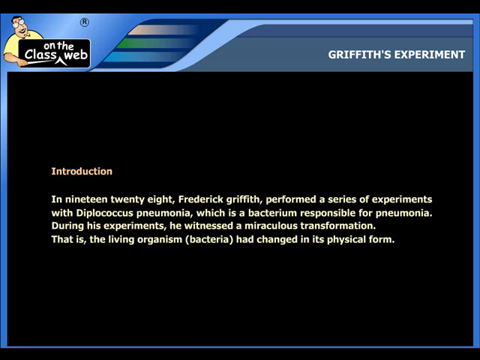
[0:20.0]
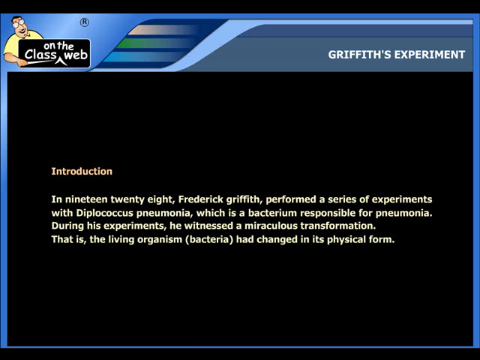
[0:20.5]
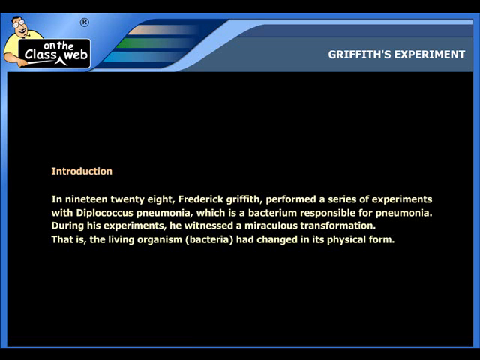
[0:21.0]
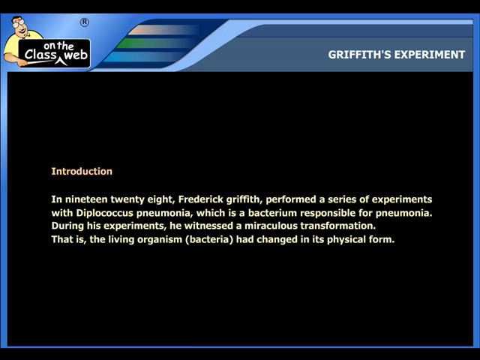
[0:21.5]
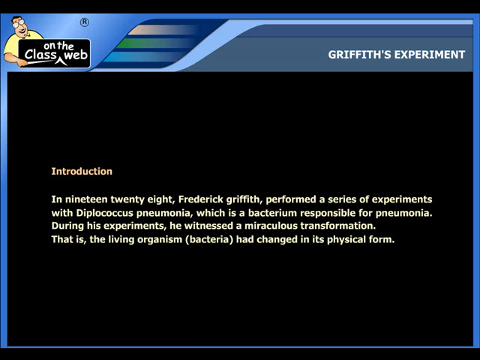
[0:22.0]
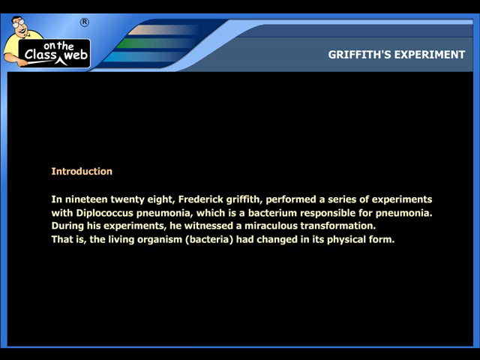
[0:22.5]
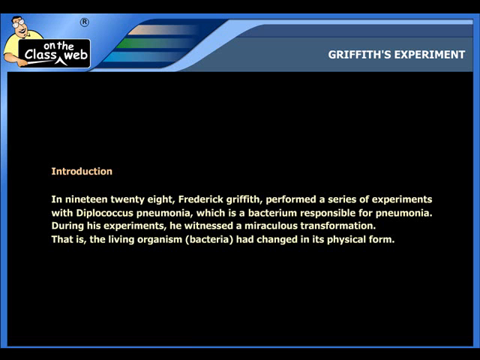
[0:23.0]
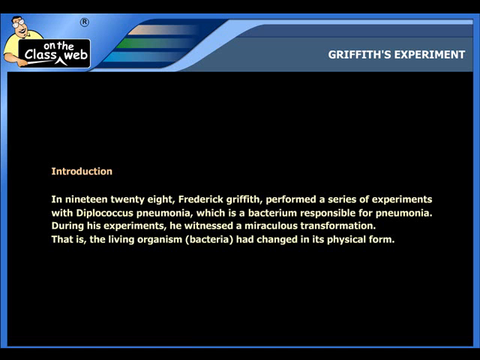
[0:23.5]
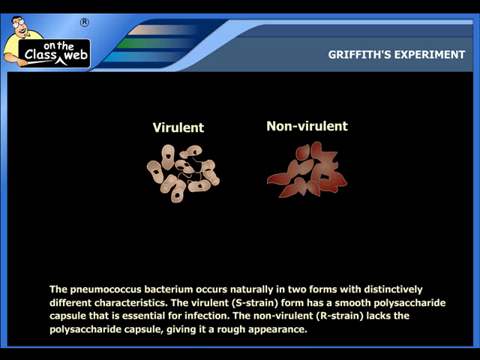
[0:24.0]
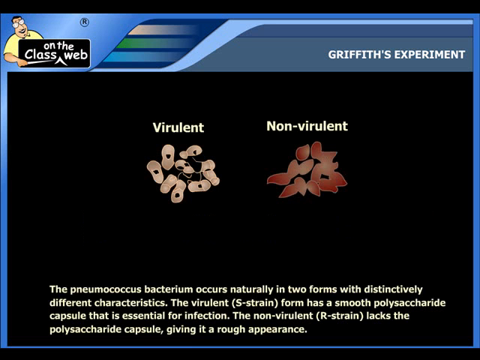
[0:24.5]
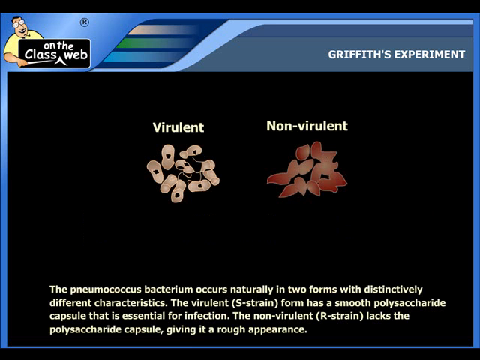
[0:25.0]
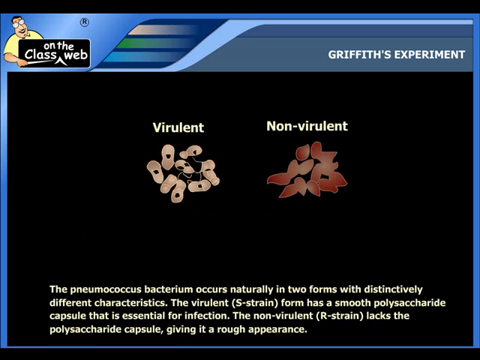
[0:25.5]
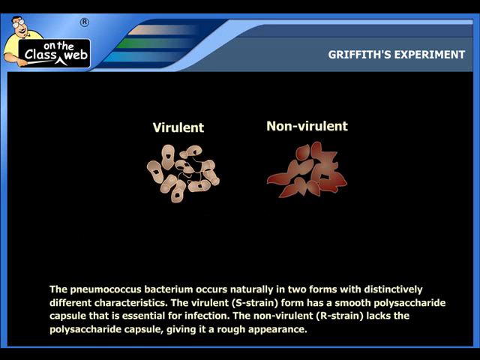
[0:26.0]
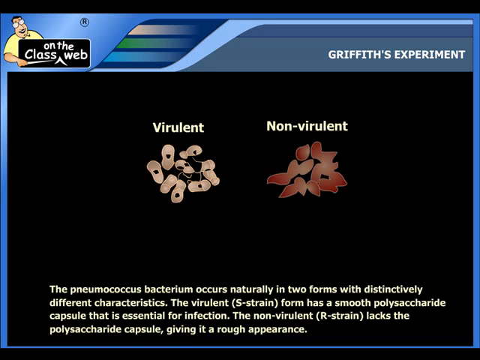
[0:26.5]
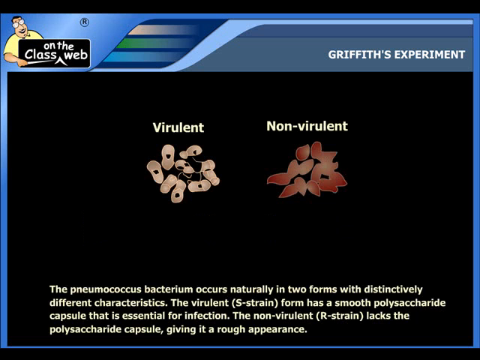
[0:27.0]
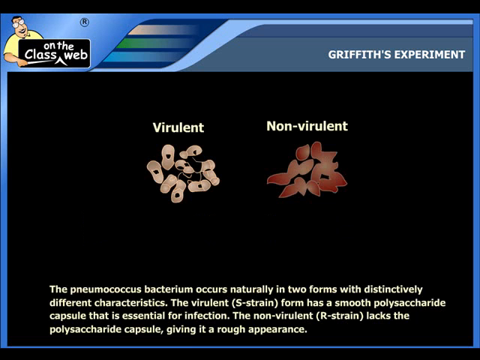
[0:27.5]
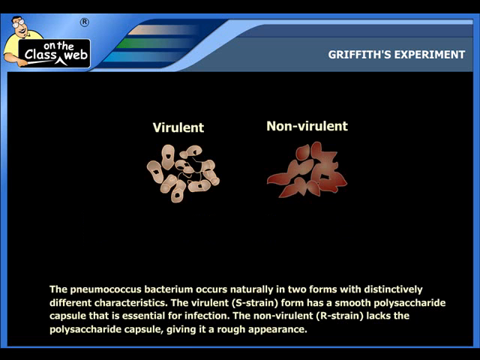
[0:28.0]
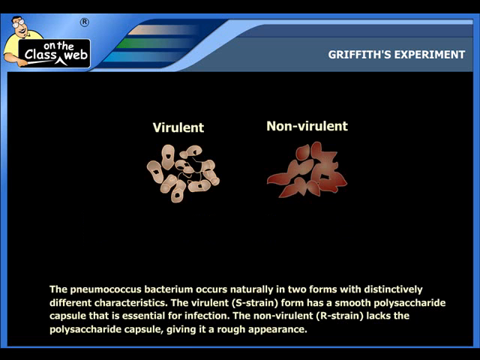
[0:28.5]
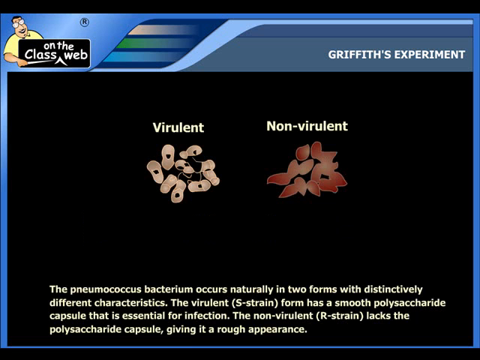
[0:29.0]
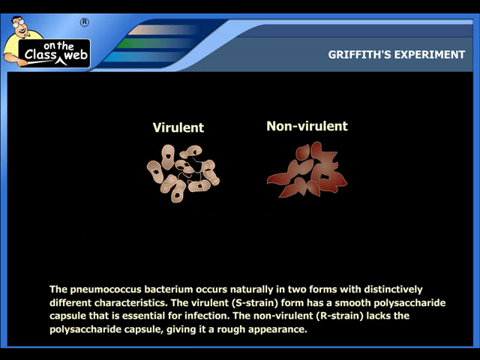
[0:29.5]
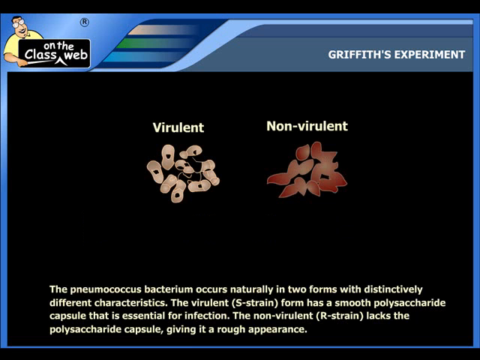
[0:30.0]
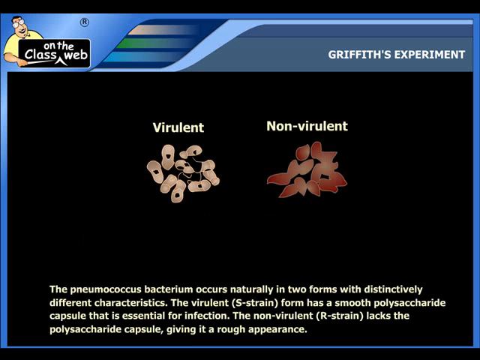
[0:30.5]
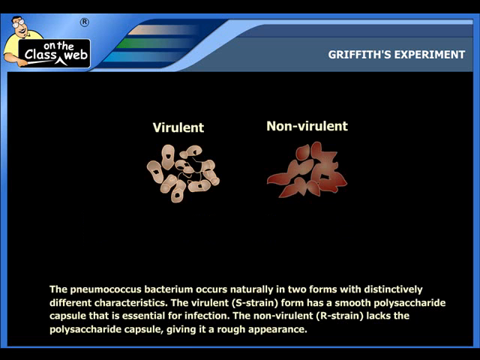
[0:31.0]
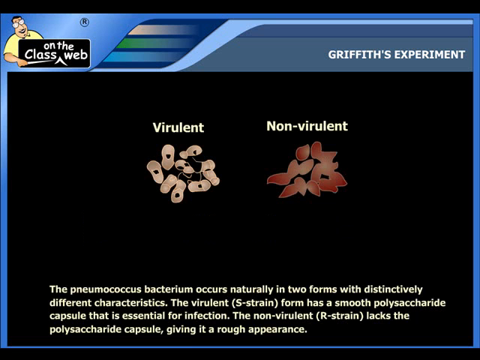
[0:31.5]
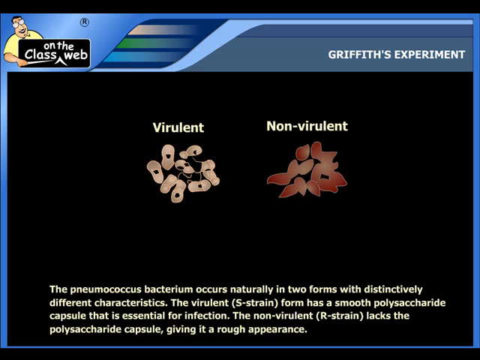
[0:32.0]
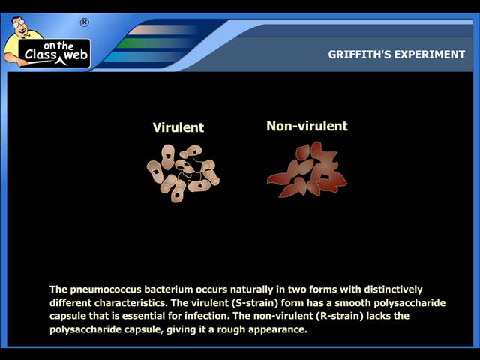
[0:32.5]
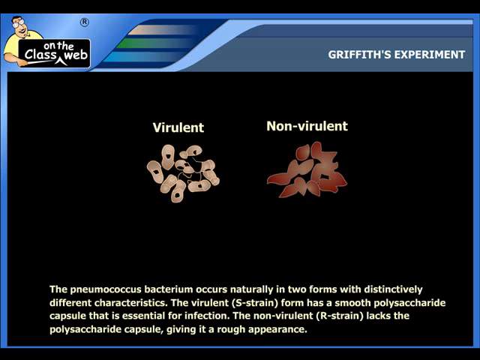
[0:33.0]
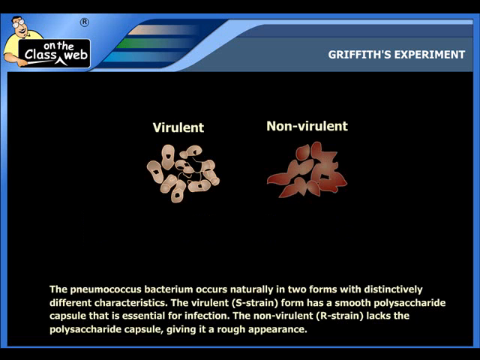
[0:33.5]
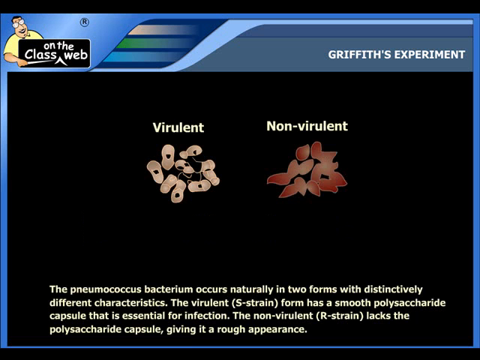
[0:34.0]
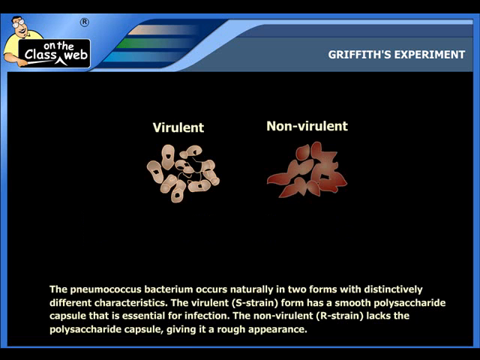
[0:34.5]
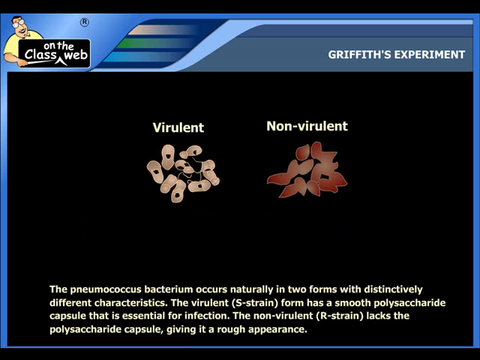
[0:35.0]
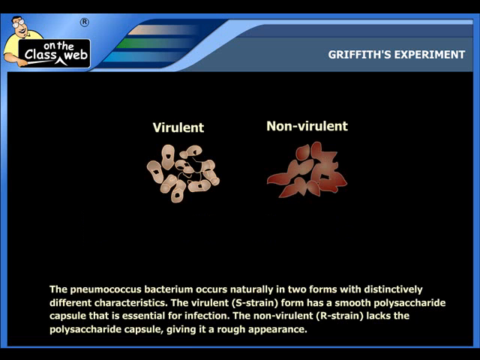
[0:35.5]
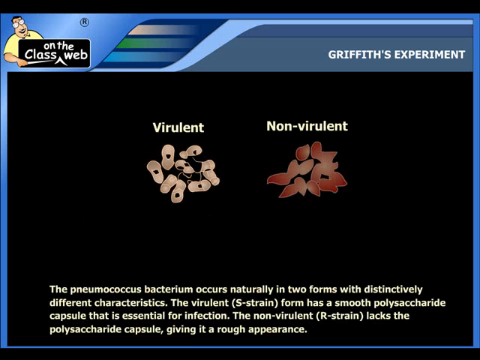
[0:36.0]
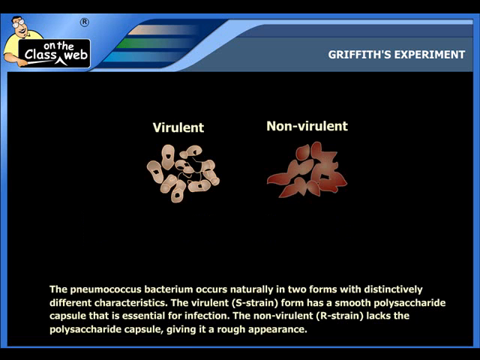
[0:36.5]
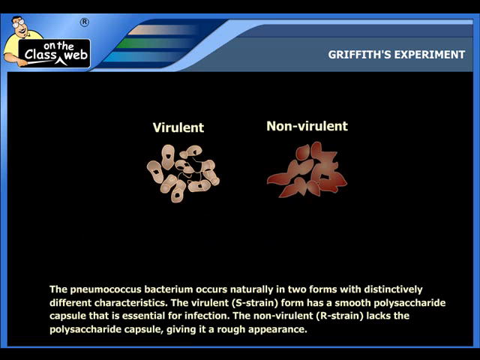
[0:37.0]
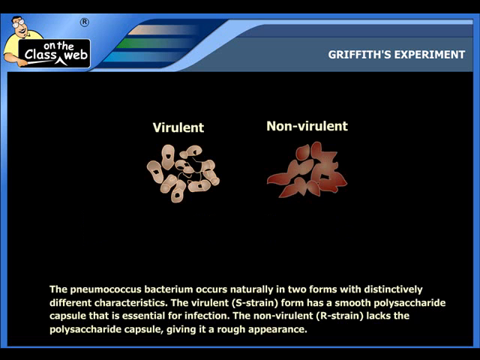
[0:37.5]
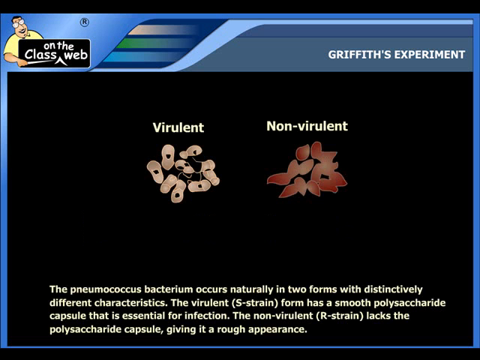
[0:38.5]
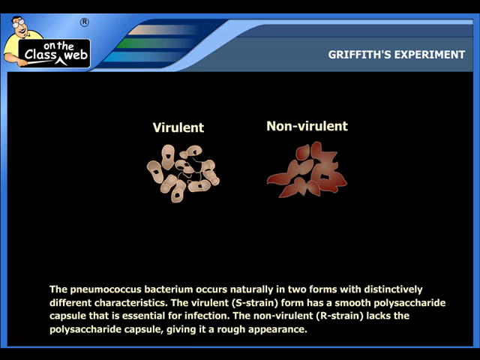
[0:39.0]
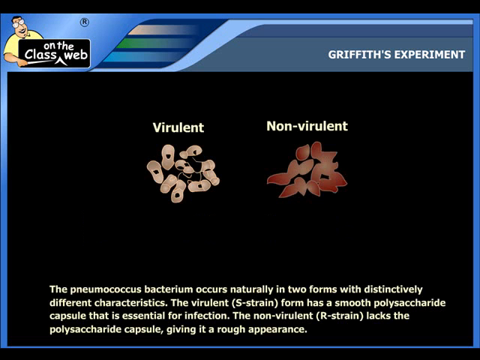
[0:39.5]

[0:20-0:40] In the upper left corner is a little cartoon man with glasses, dark hair and a yellow shirt. He holds a sign with a pointer; the sign is black with white letters and says "Own the class web." To the right, on the right side of the screen, white letters read "Griffith's Experiment." Underneath is "Introduction," followed by the text: "In 1928, Frederick Griffith performed a series of experiments with Diplococcus pneumoniae, which is a bacterium responsible for pneumonia. During his experiments, he witnessed a miraculous transformation. That is, the living organism (bacteria) had changed in its physical form."